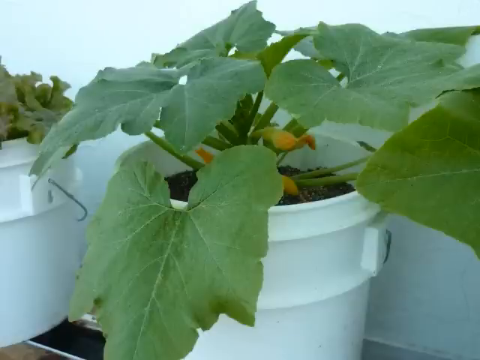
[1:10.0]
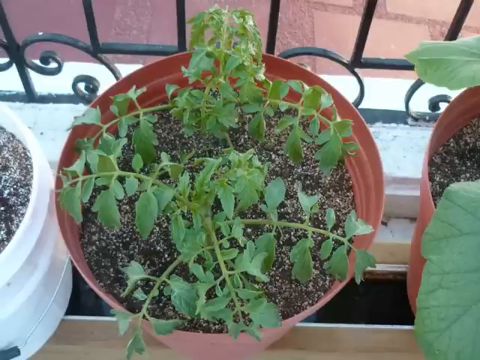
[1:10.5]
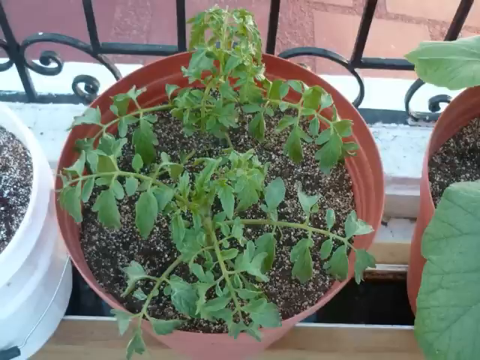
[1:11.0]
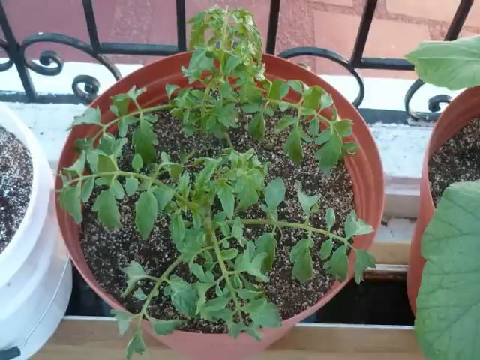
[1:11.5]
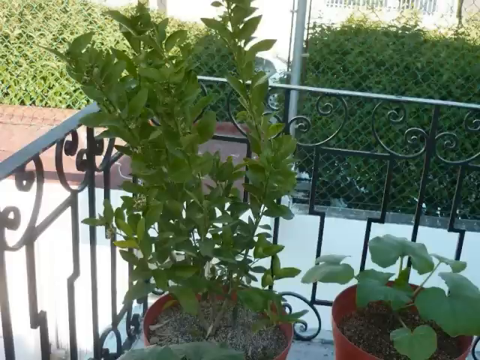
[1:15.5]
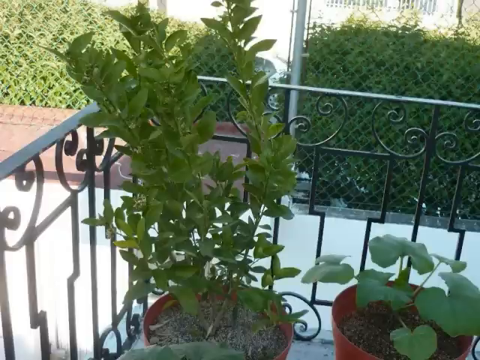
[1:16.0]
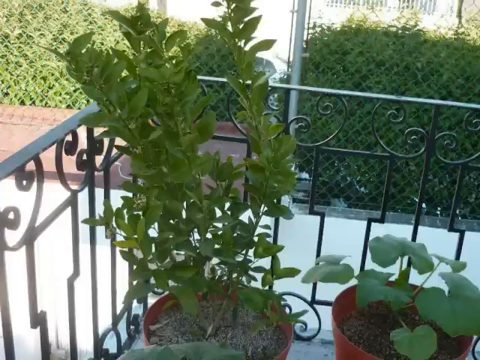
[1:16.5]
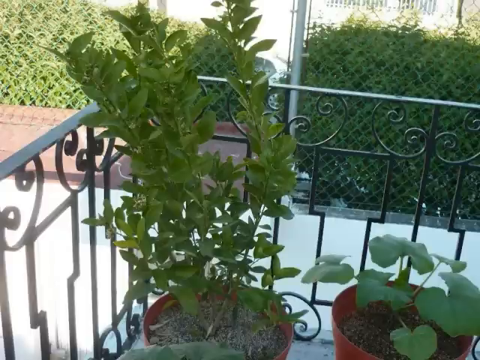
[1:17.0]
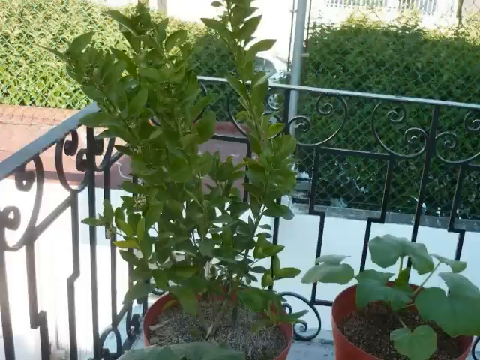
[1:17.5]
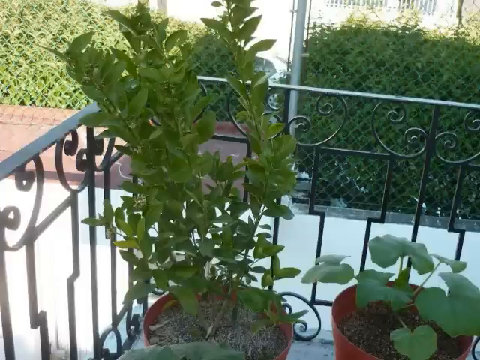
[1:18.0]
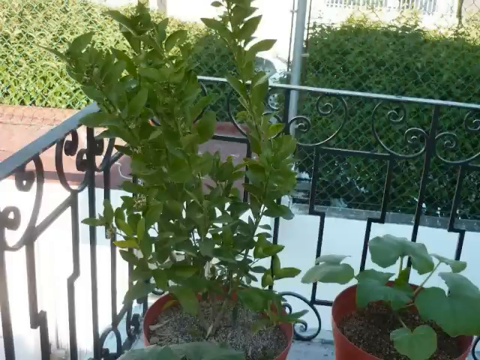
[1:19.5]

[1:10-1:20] Two tomato plants grow in red buckets. The two red buckets are close to each other, with a white bucket on the left. Another, unidentified plant is also growing in a red bucket. The bucket is in the corner of the house where the plants are grown. In the background there is a well-made fence of wire mesh, with plants growing next to the wire mesh.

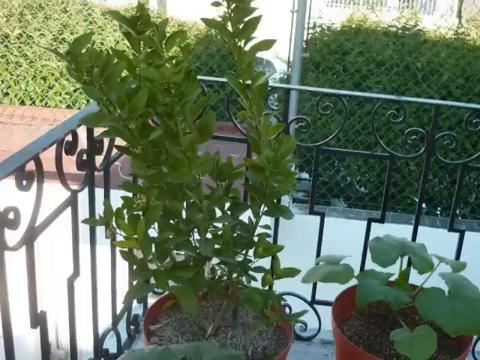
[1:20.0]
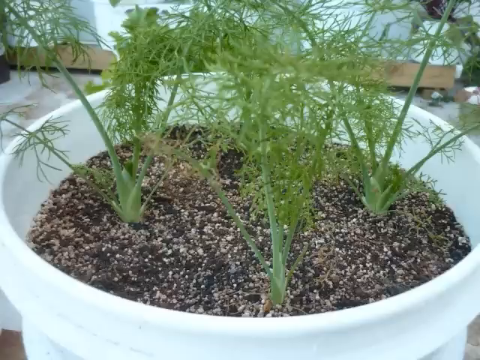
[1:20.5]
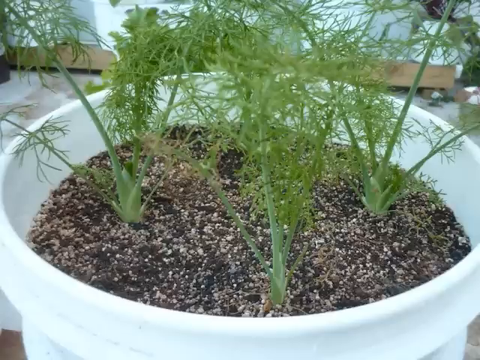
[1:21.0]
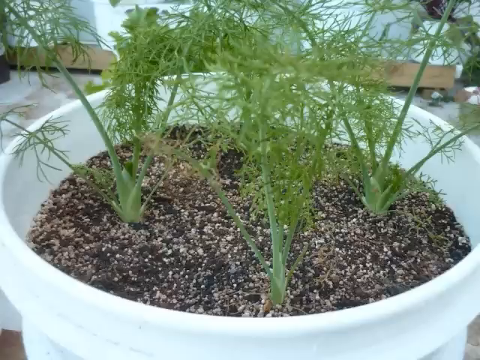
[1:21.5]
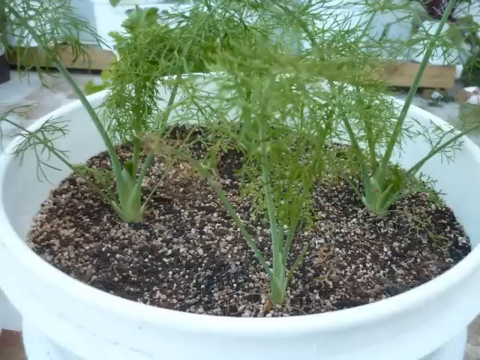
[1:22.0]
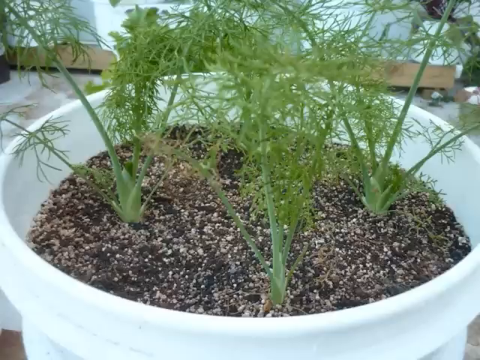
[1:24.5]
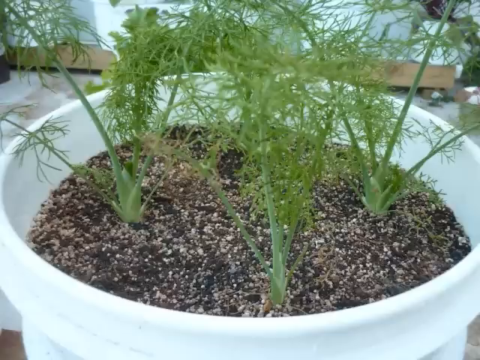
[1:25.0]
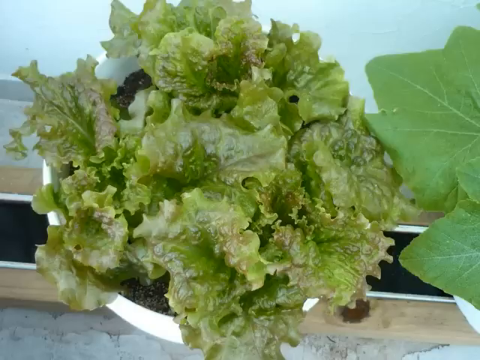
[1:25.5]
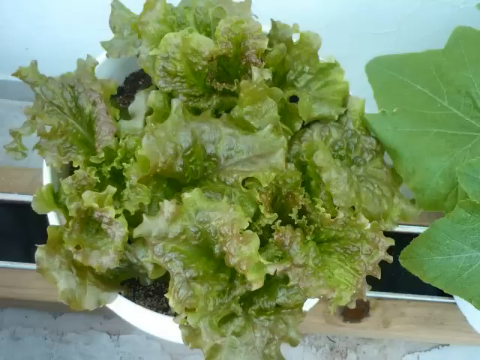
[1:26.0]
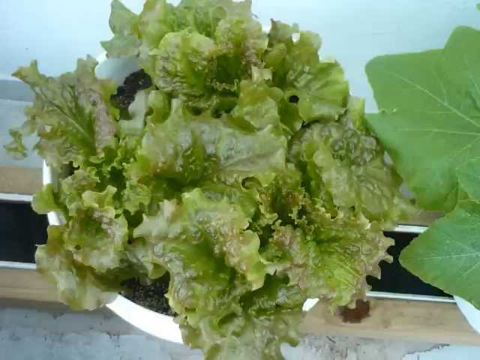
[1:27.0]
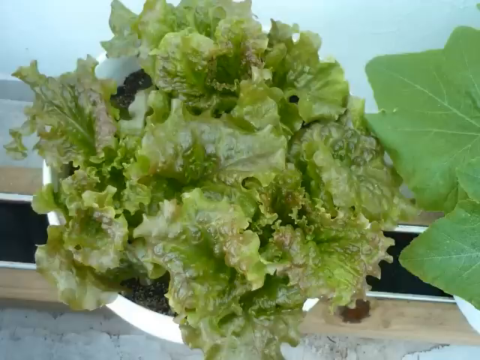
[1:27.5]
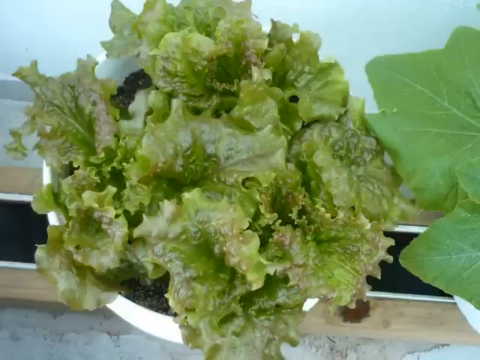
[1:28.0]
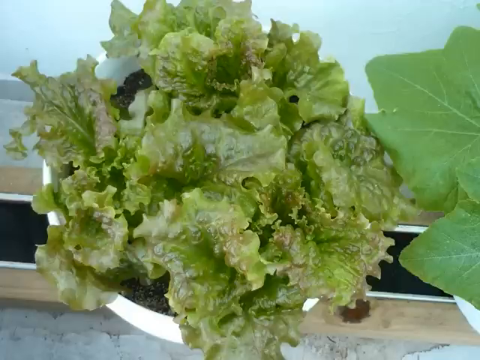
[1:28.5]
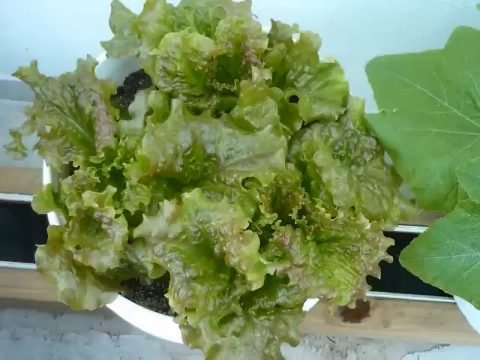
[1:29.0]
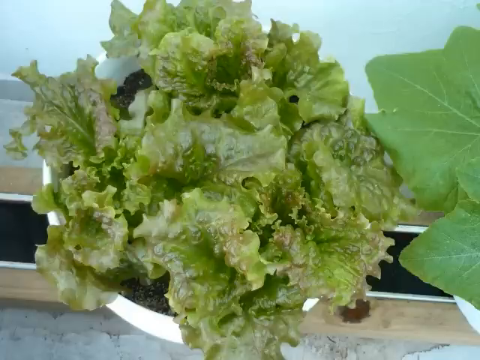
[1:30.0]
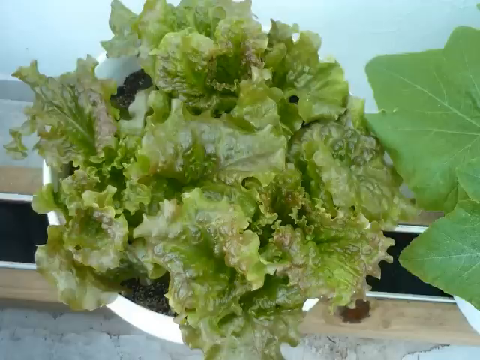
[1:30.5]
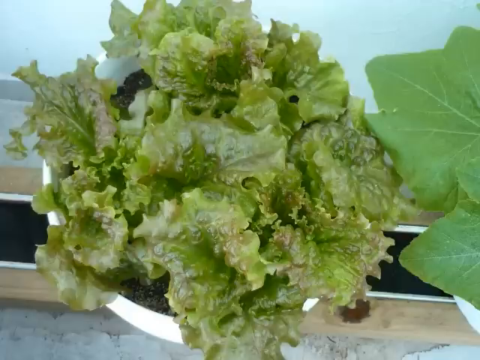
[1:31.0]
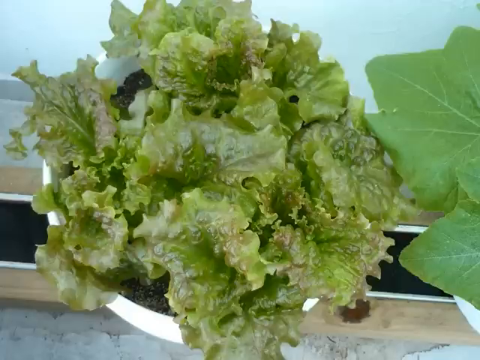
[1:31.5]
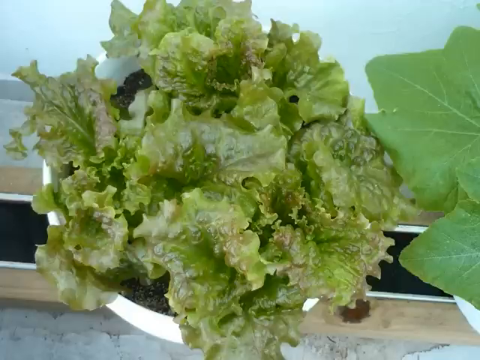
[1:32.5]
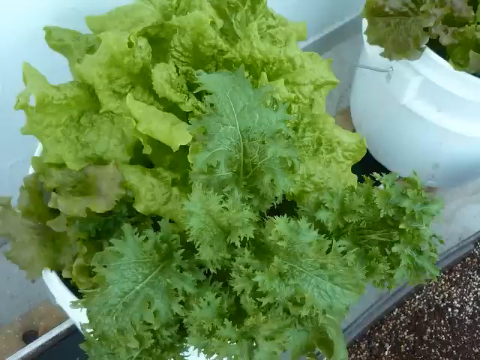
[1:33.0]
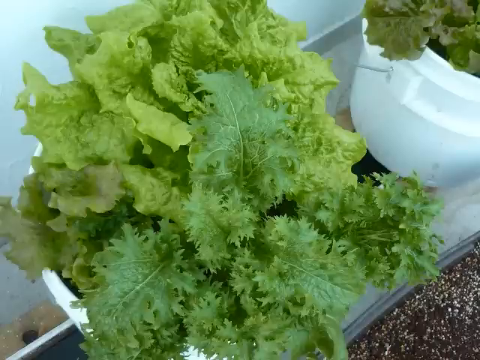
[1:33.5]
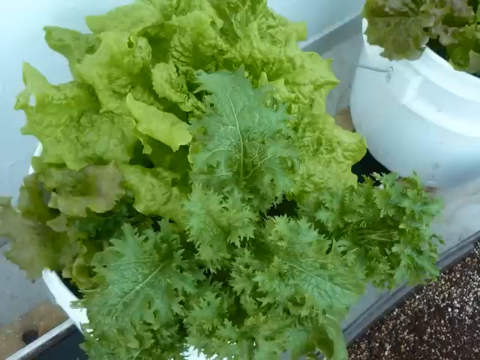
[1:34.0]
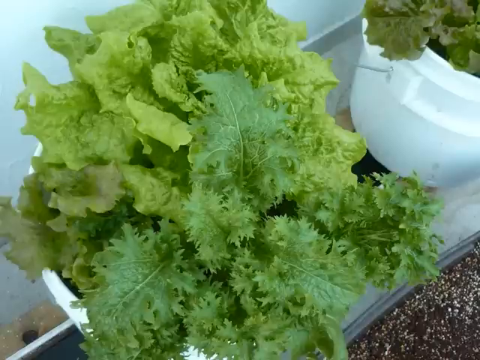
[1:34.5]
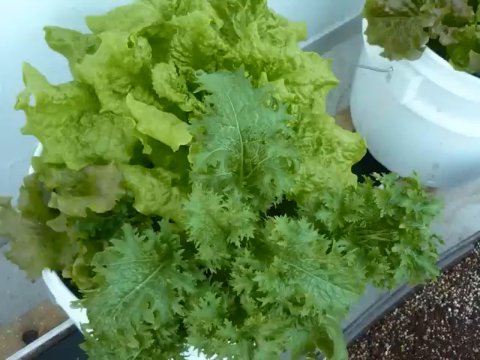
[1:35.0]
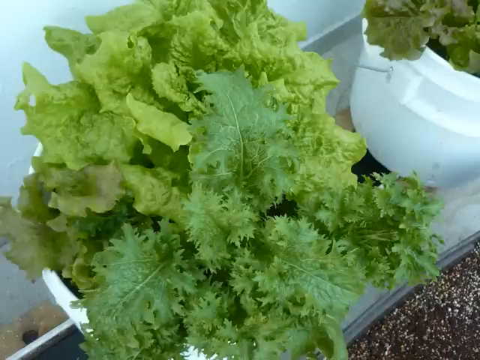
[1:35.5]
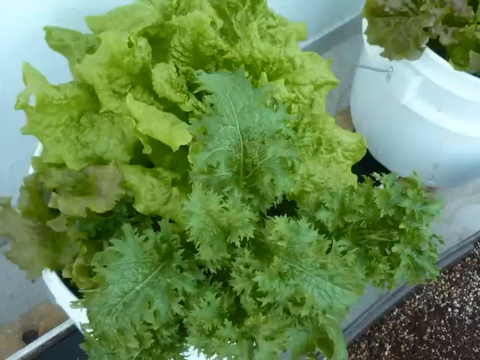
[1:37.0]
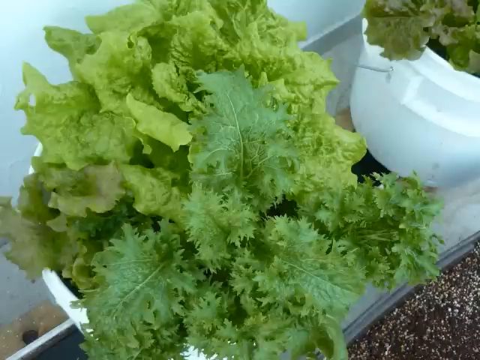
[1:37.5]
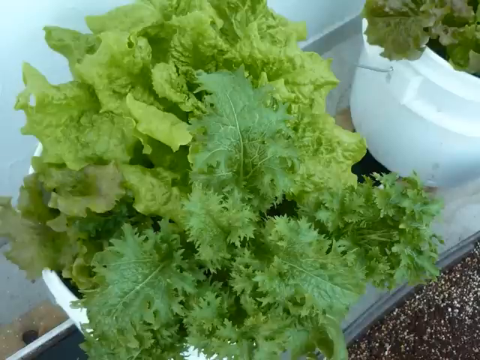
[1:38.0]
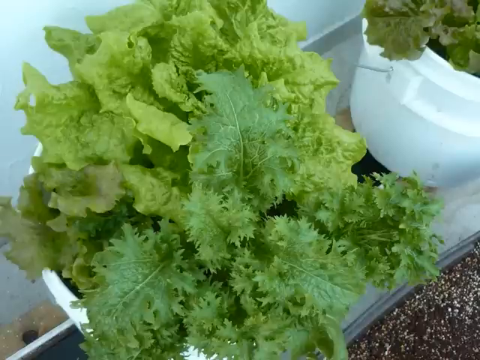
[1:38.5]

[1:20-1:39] Three plants, apparently carrots, grow in a white bucket. Next, the leaves of a vegetable plant growing in a white bucket are shown; the leaves are green with purplish spots. More vegetables are seen growing in the white buckets, apparently spinach or kale together with coriander, with three types of plants growing together in this particular bucket. Another bucket on the right side of the frame also holds the vegetable plant with green and purplish leaves.